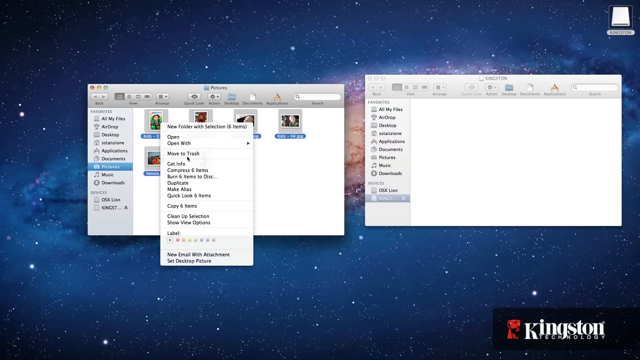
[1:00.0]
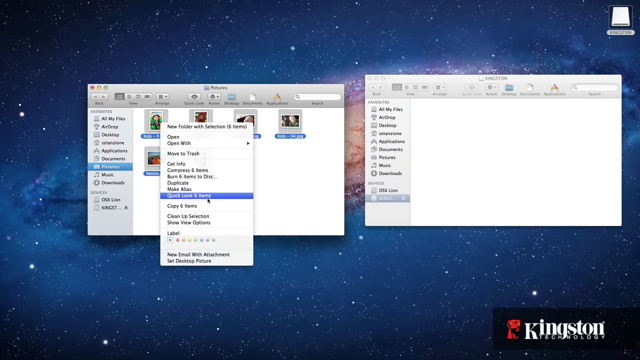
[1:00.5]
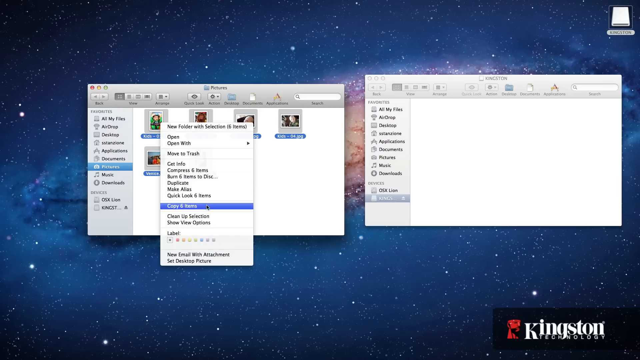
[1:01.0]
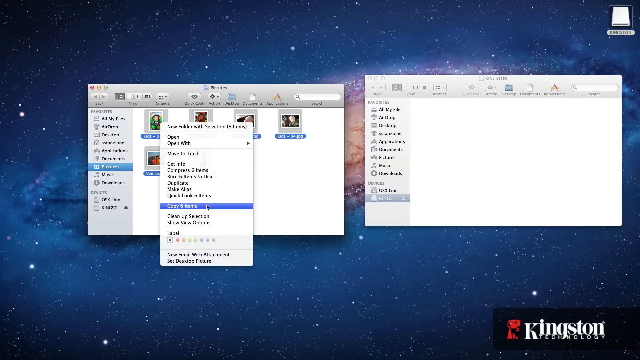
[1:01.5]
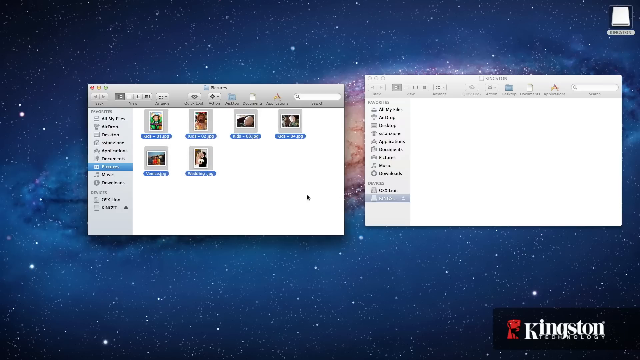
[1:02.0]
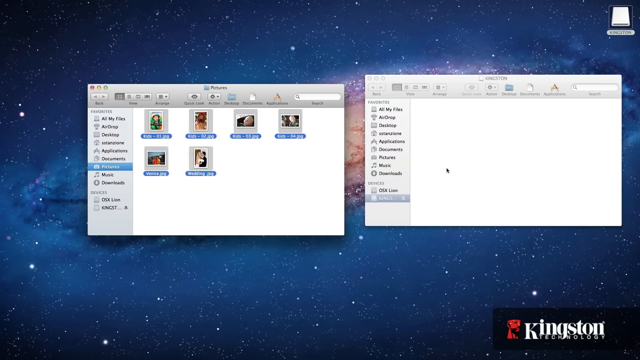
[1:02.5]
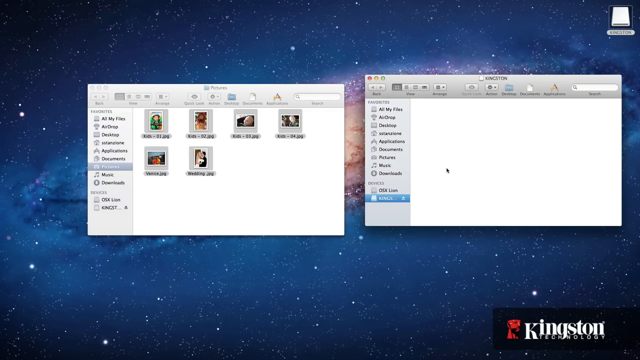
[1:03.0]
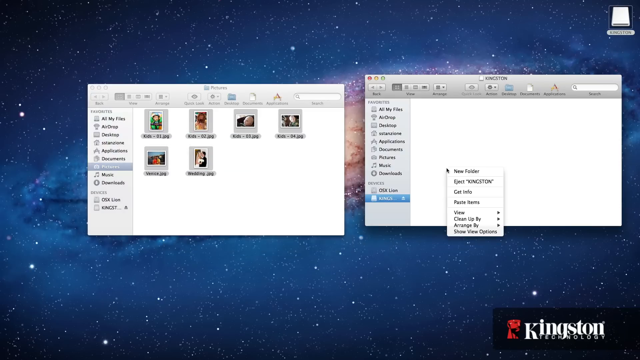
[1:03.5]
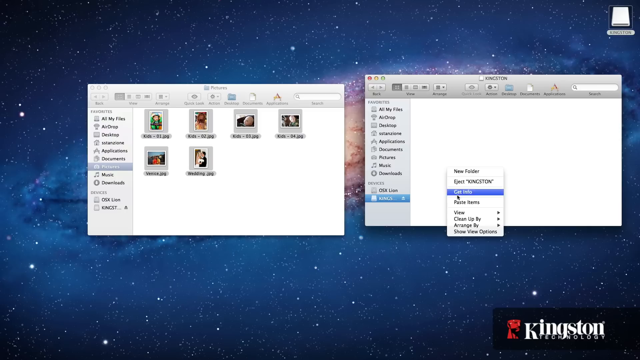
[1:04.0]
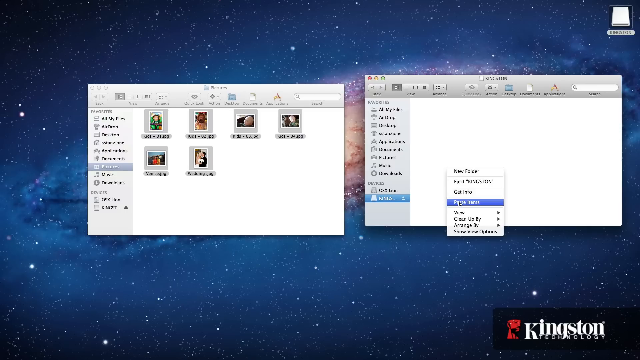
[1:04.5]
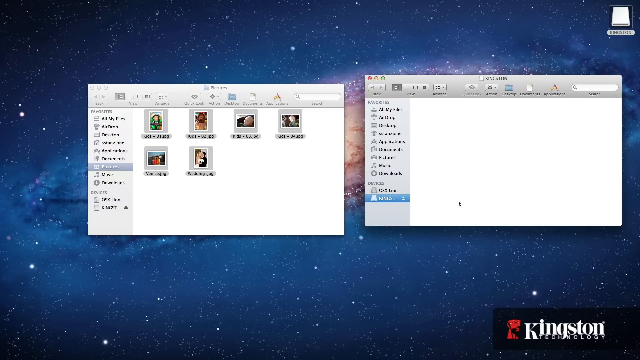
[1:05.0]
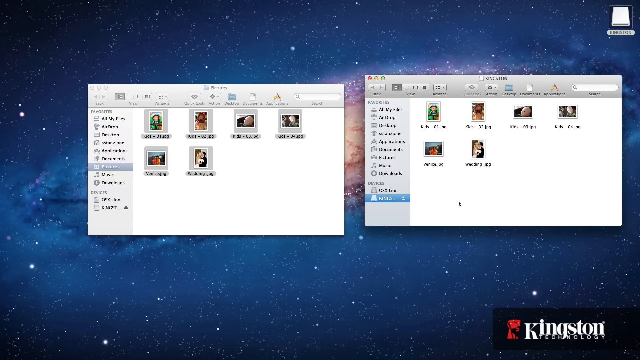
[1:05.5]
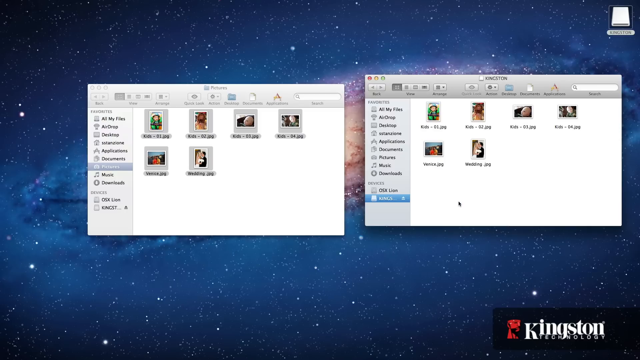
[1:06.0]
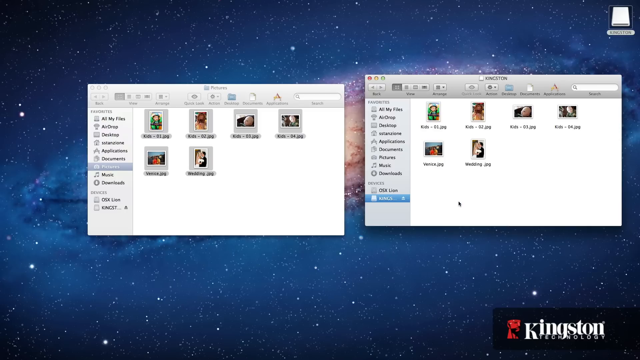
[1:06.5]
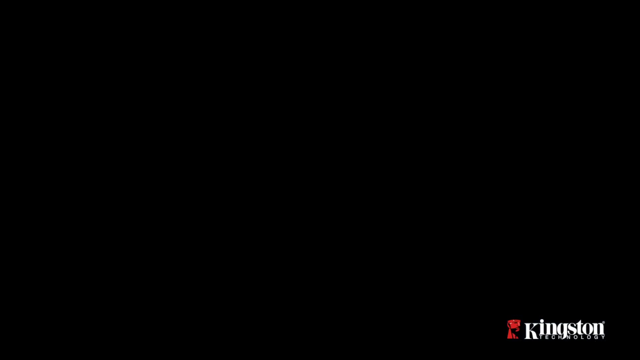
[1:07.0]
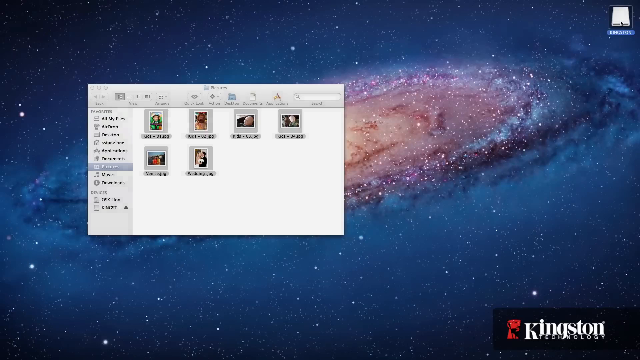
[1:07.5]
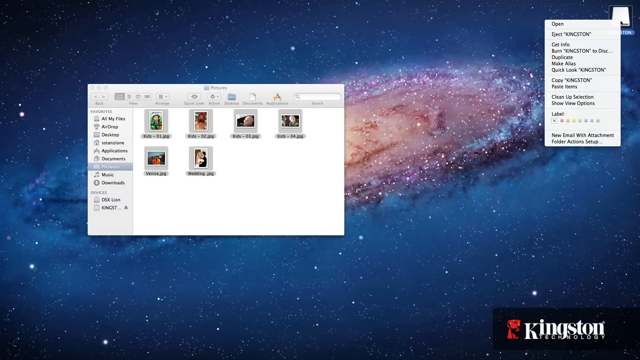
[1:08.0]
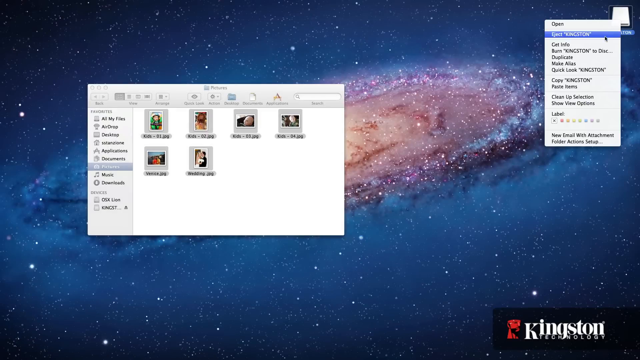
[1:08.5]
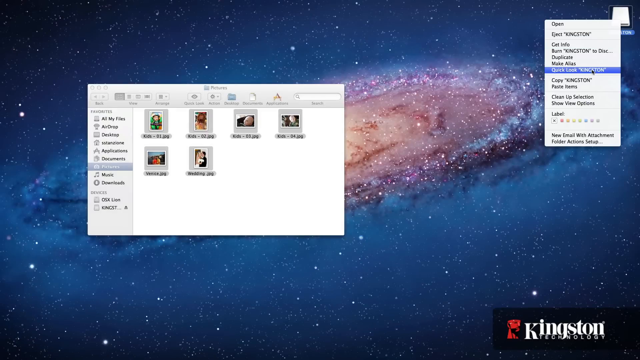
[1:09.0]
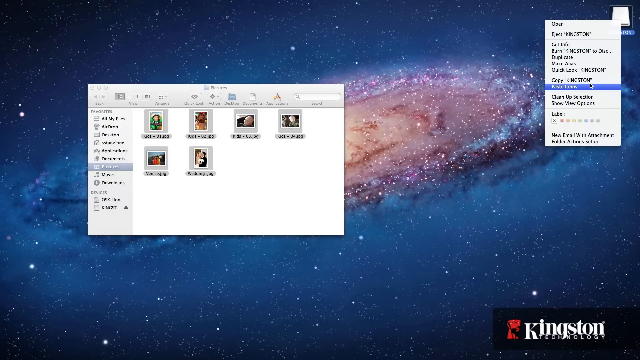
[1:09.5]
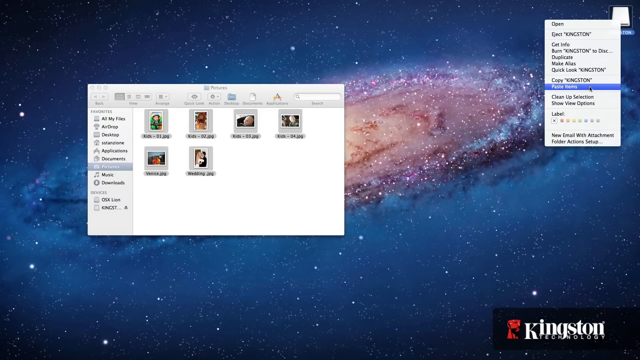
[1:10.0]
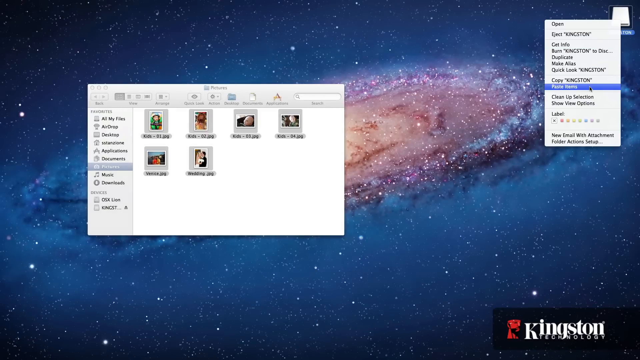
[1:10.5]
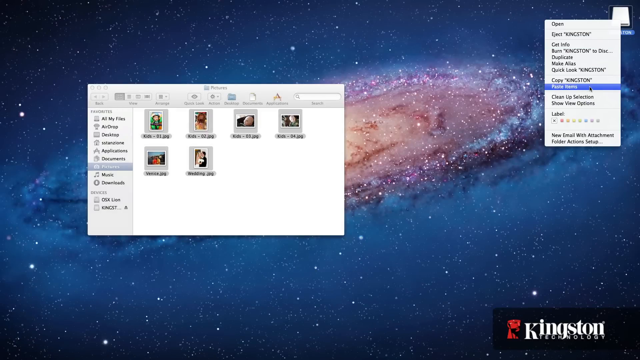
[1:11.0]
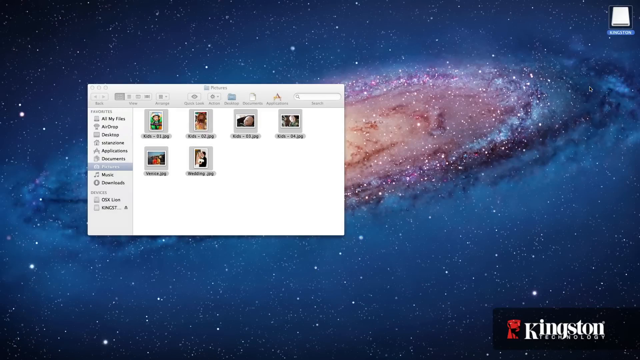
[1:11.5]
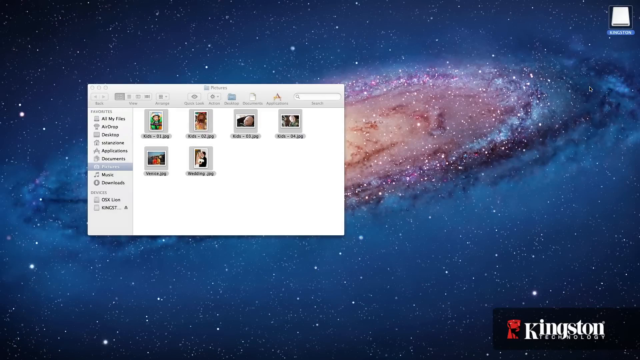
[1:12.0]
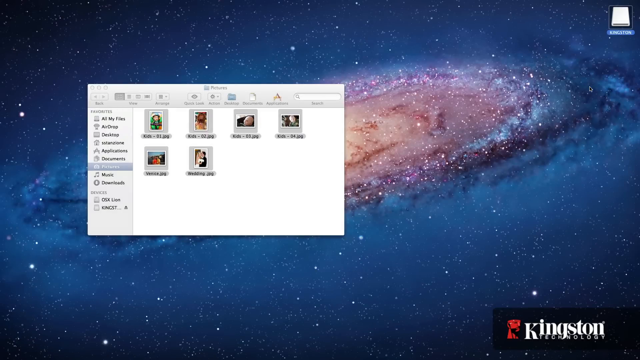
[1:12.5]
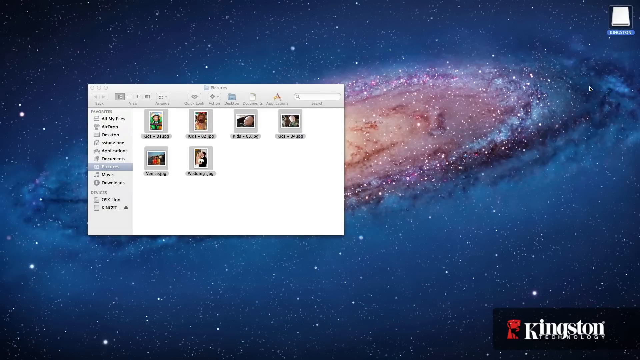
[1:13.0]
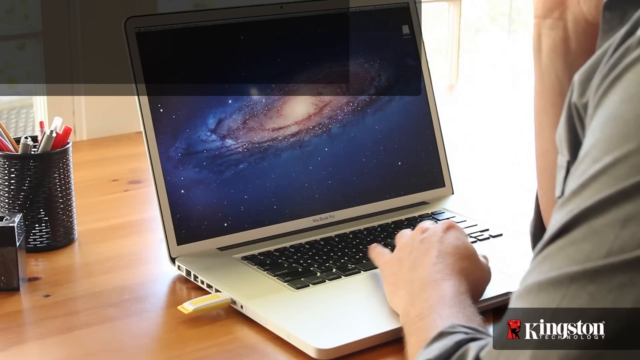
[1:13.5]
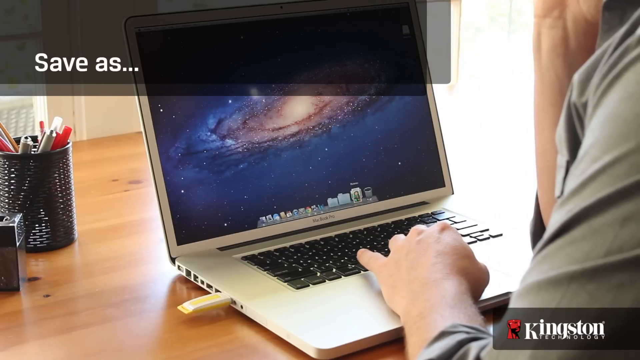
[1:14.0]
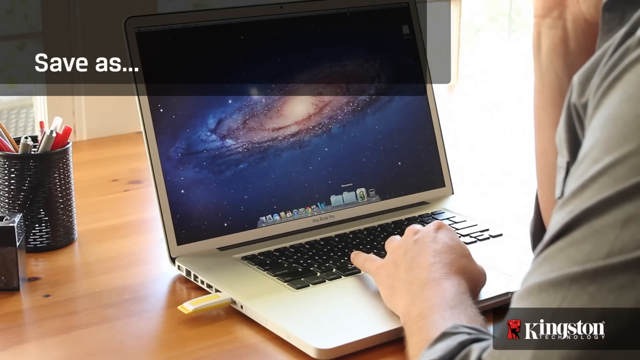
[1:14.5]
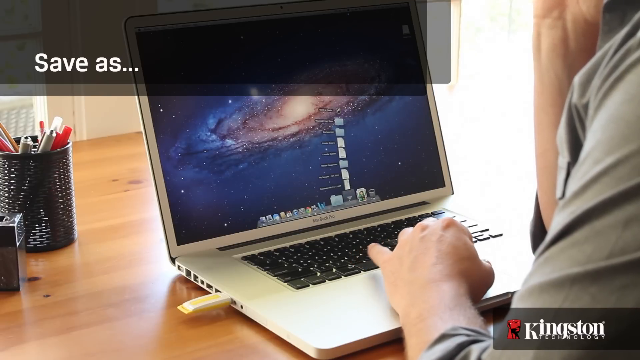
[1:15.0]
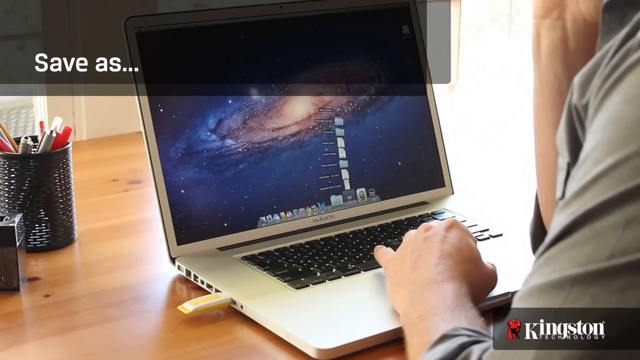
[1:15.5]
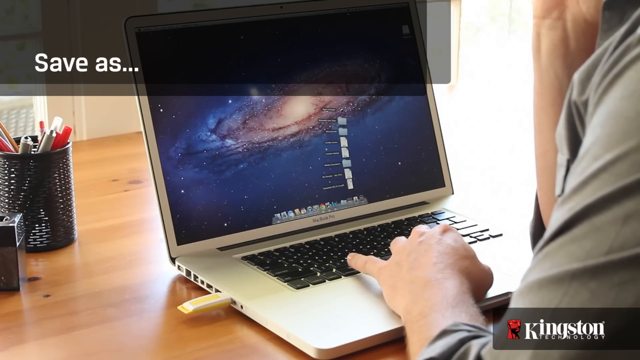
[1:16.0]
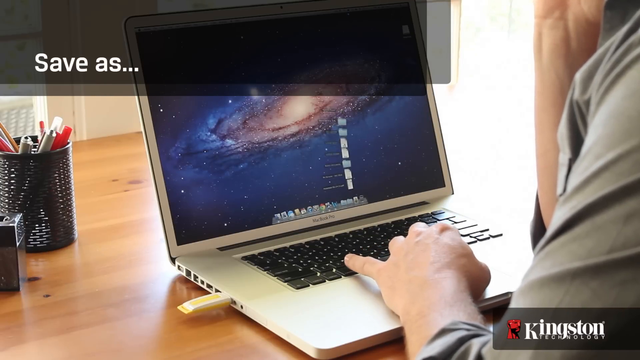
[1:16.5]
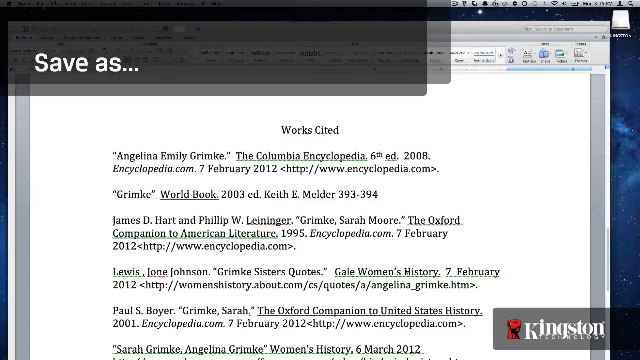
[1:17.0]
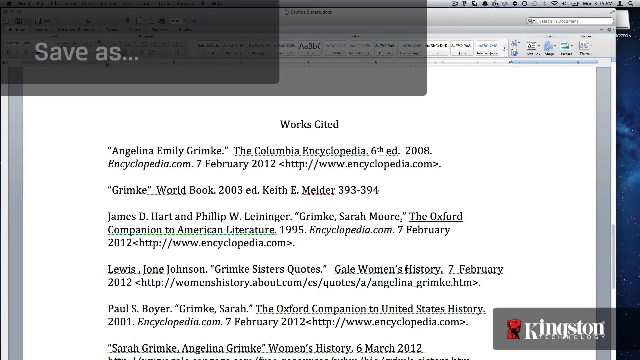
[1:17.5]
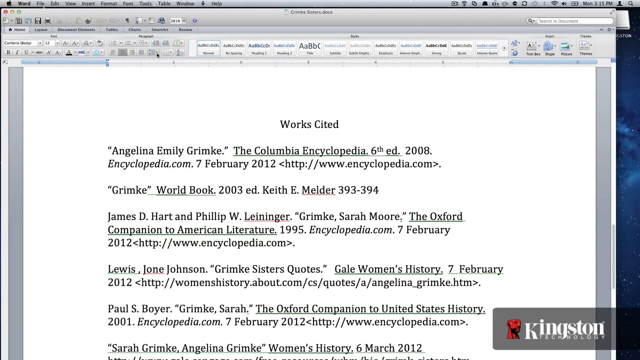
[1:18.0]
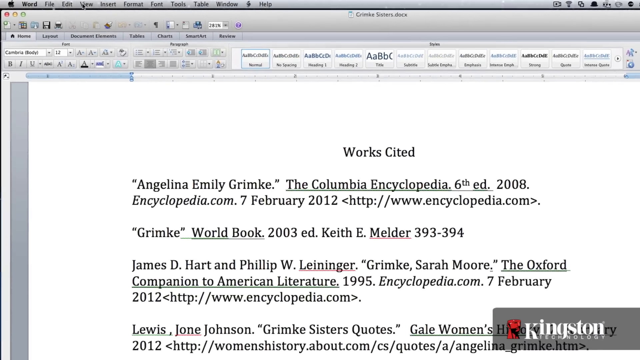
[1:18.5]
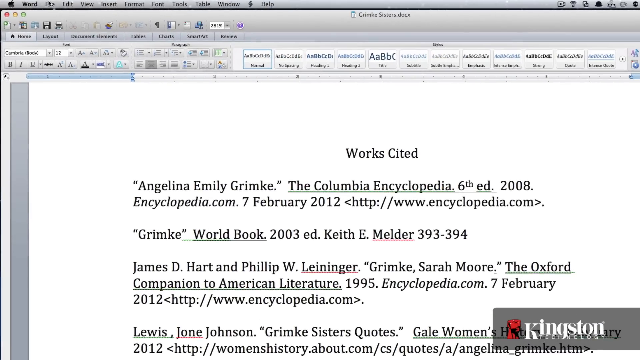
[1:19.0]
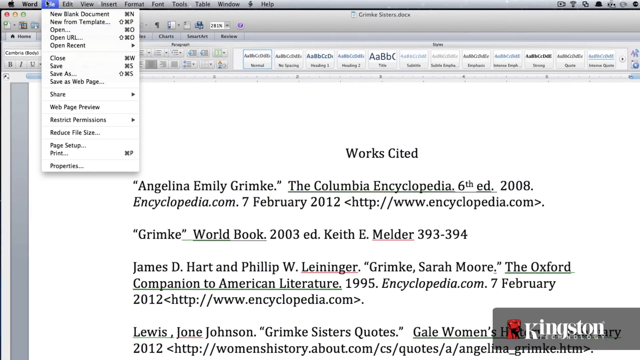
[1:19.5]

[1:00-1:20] Drop-down menus are open on a computer screen whose background looks like outer space. Someone has opened a drop-down menu that says "new folder with selections" and "six items," with options to copy all six items, "open," "open with," "move to trash," "get info" and more. They go down to copy, then to paste, making an exact copy on the other side with "paste items." Then "save as..." appears in the upper left-hand corner. A works cited page comes up, with citations reading "Angelina Emily Grimke," "Grimke world book," "James D Hart" and "Philip W Leininger." The monitor's background almost looks like an outer-space nebula, with kind of a peach color in the middle and purple and navy on the outside.